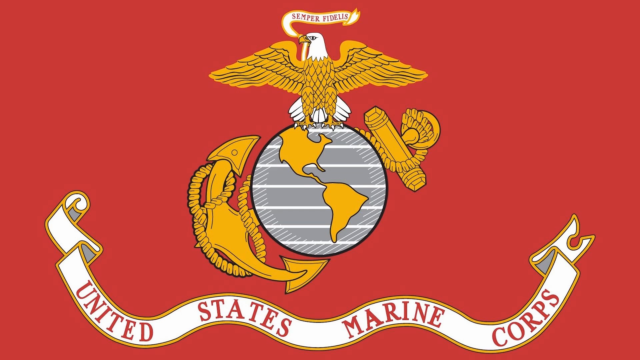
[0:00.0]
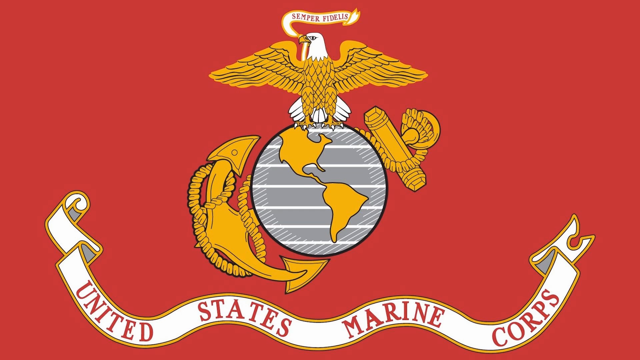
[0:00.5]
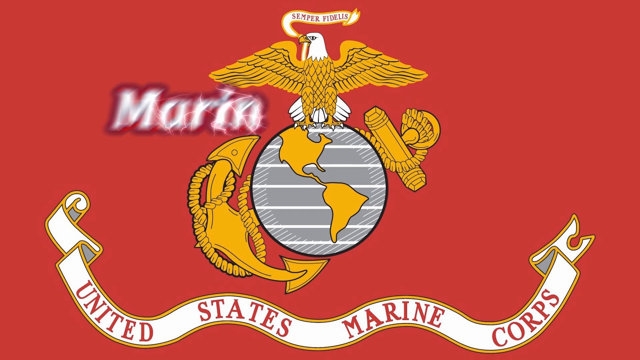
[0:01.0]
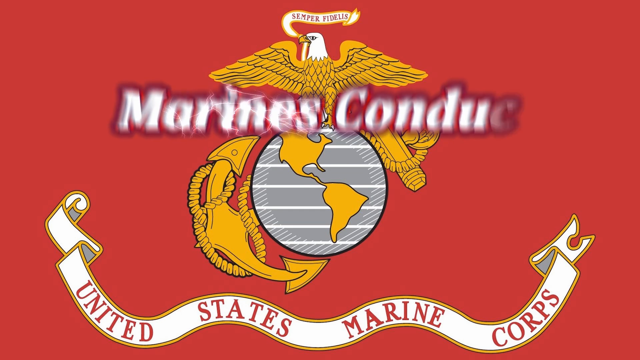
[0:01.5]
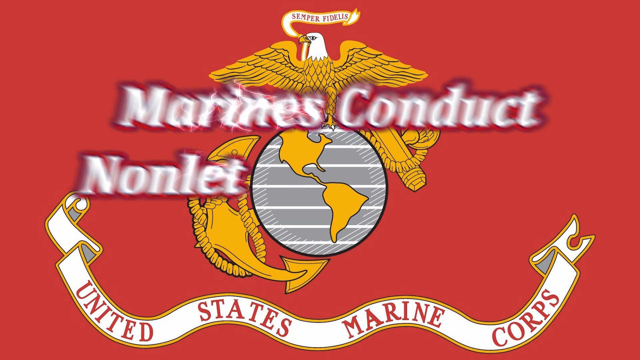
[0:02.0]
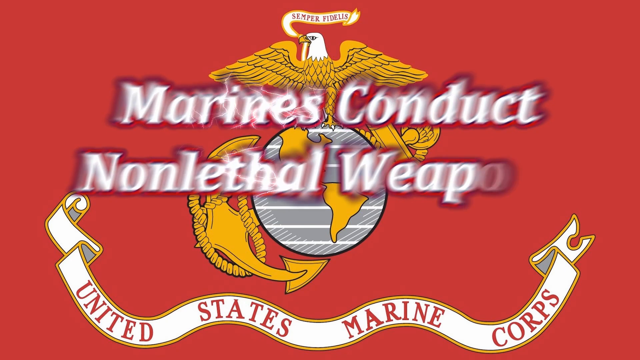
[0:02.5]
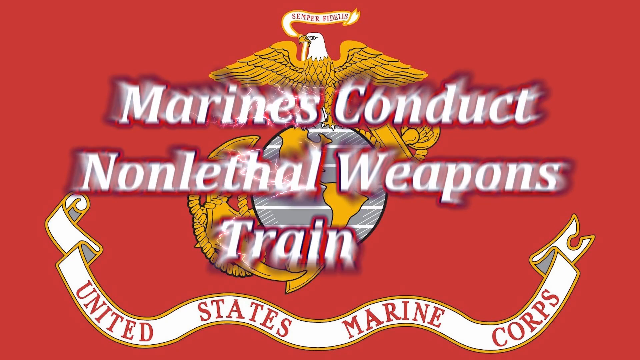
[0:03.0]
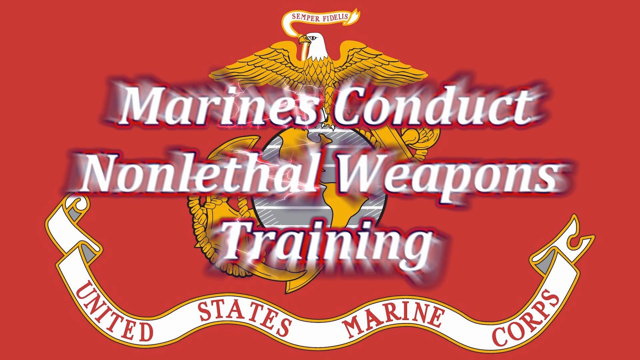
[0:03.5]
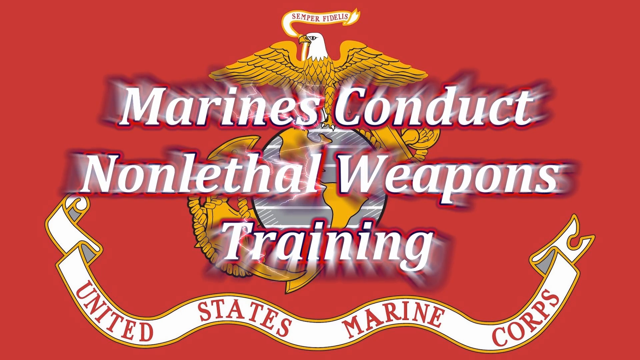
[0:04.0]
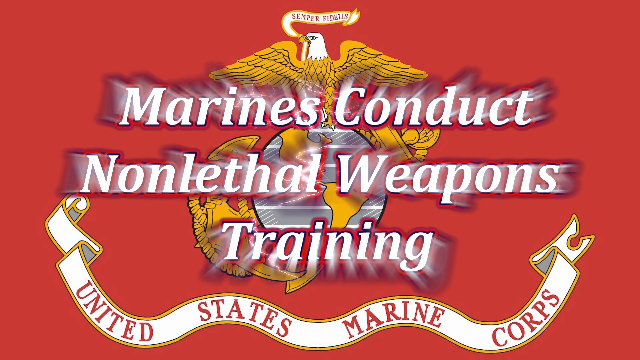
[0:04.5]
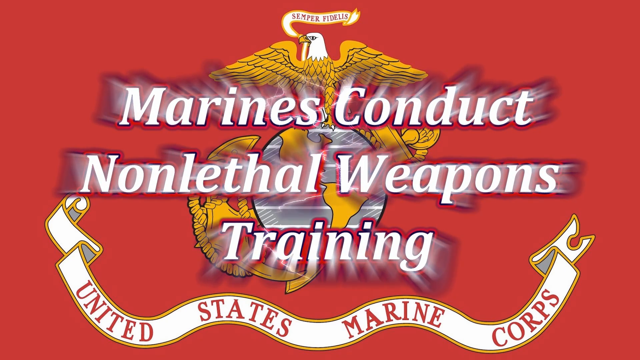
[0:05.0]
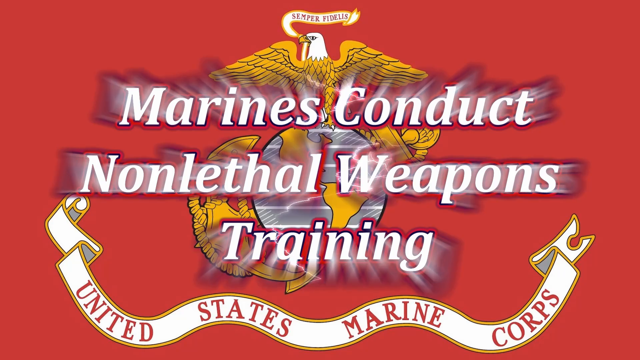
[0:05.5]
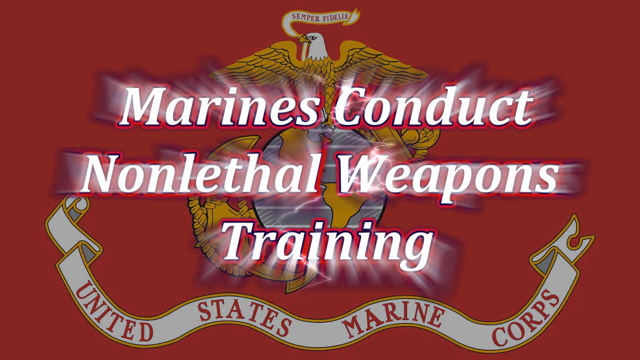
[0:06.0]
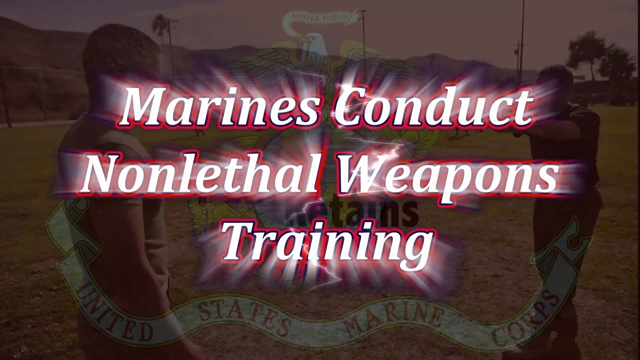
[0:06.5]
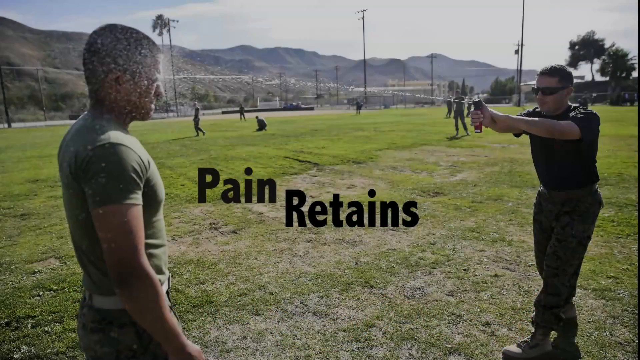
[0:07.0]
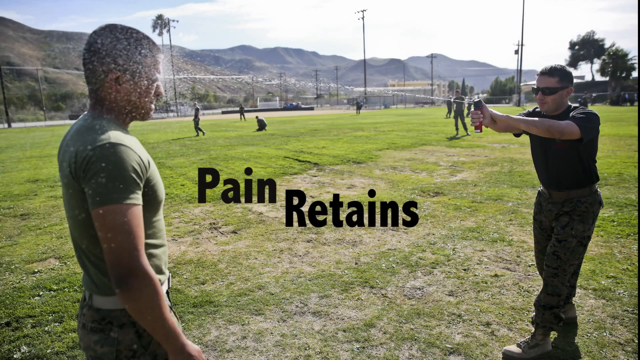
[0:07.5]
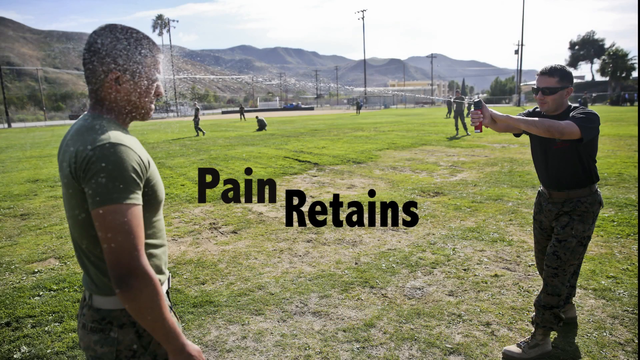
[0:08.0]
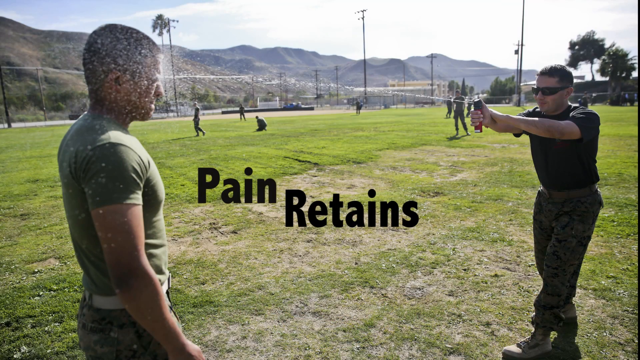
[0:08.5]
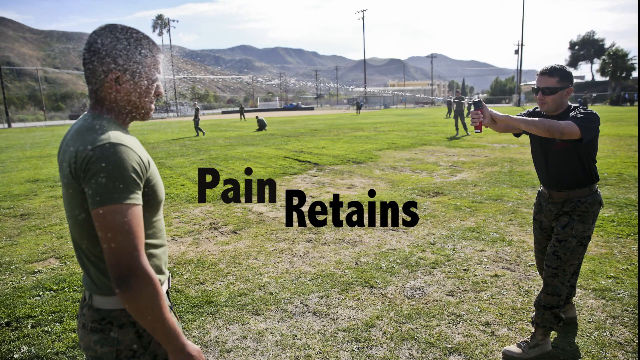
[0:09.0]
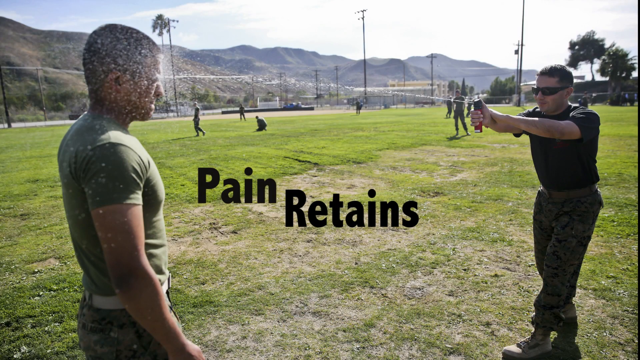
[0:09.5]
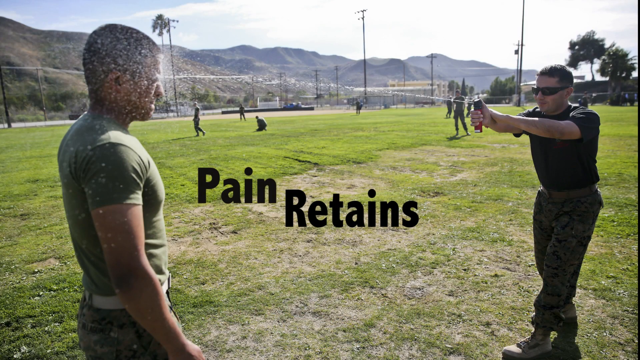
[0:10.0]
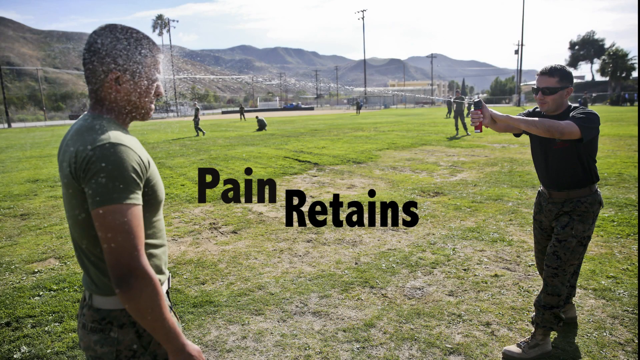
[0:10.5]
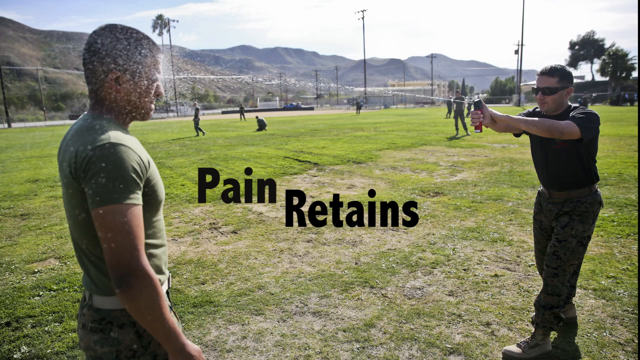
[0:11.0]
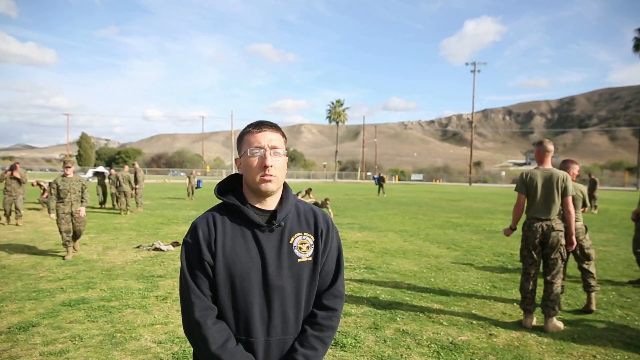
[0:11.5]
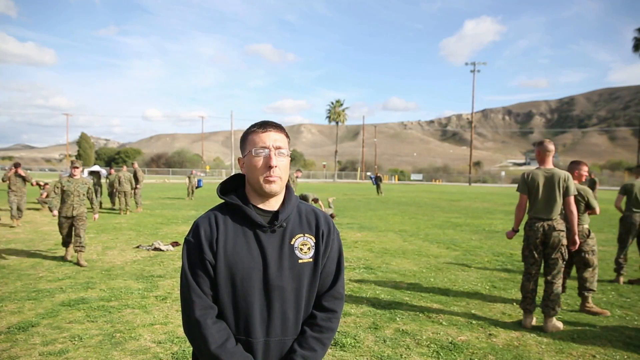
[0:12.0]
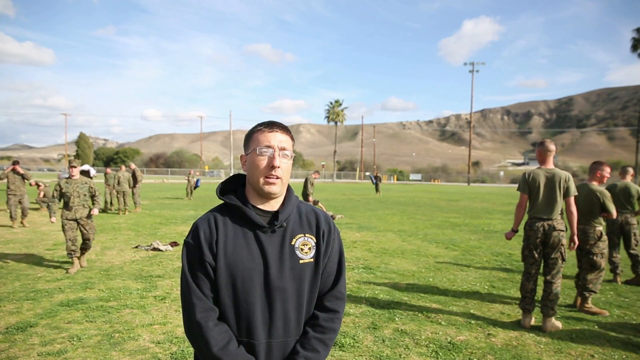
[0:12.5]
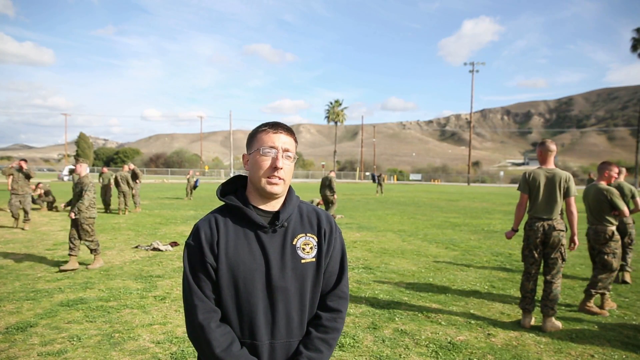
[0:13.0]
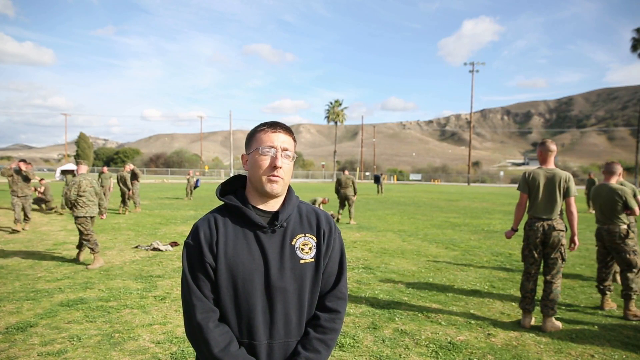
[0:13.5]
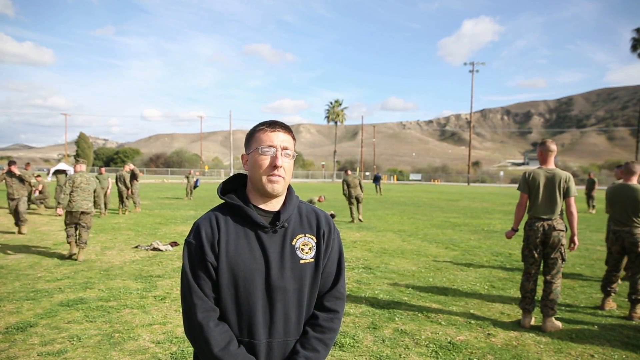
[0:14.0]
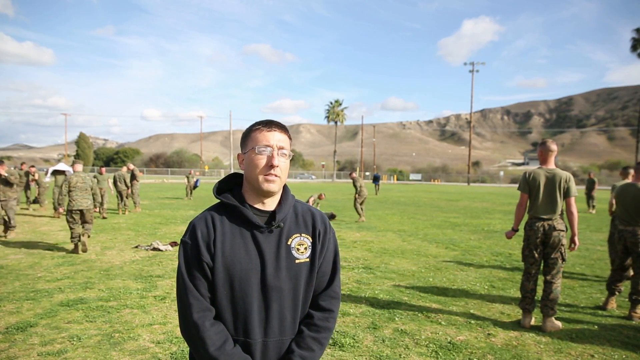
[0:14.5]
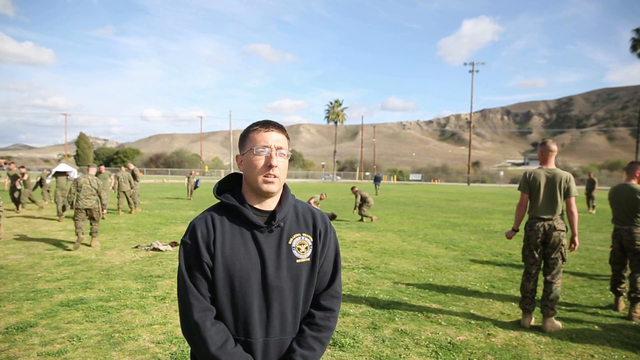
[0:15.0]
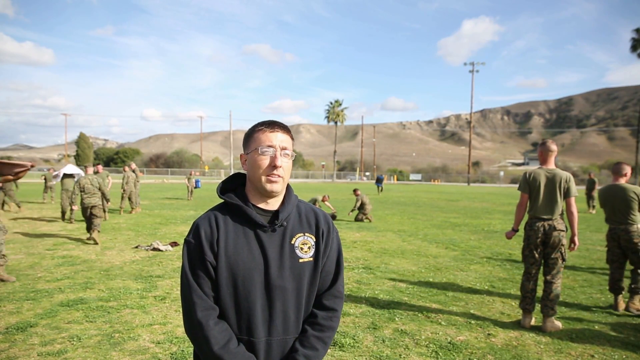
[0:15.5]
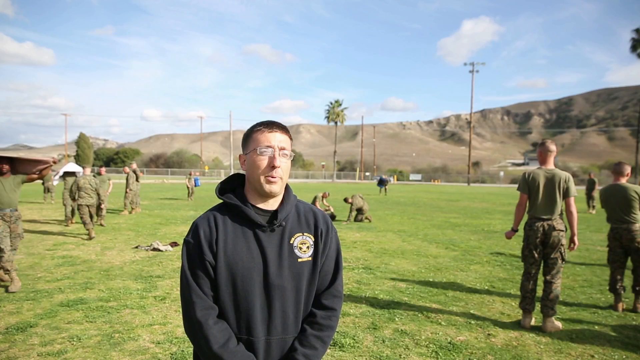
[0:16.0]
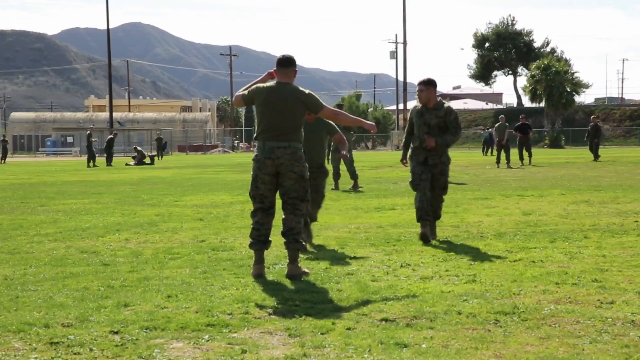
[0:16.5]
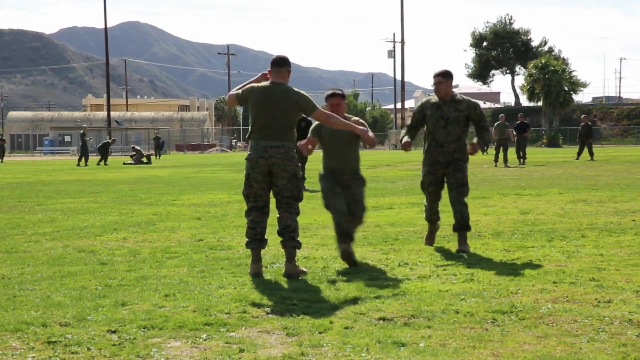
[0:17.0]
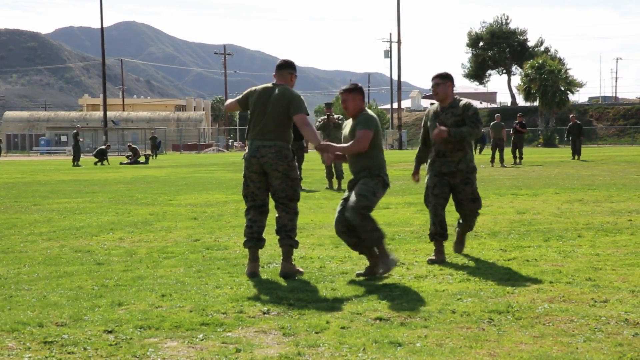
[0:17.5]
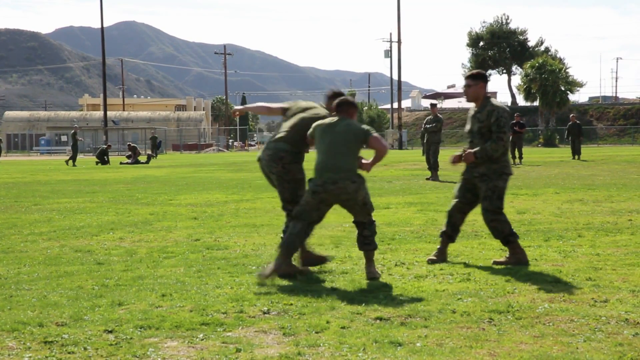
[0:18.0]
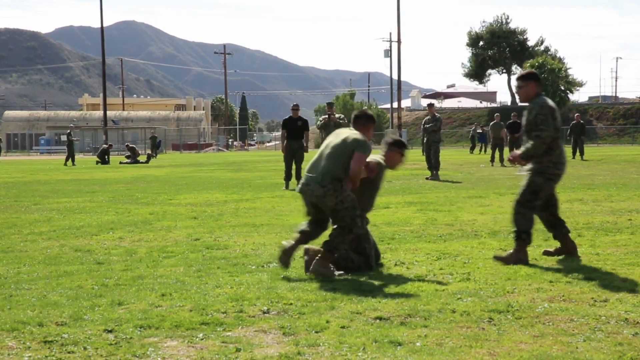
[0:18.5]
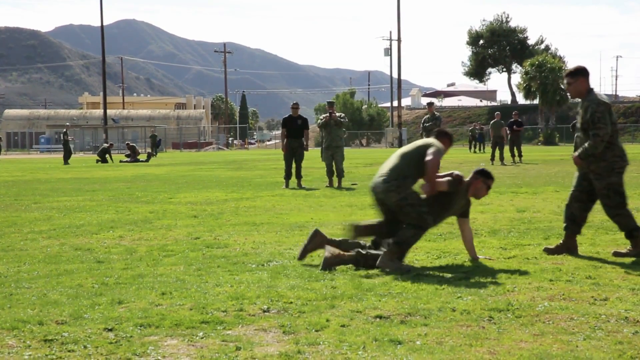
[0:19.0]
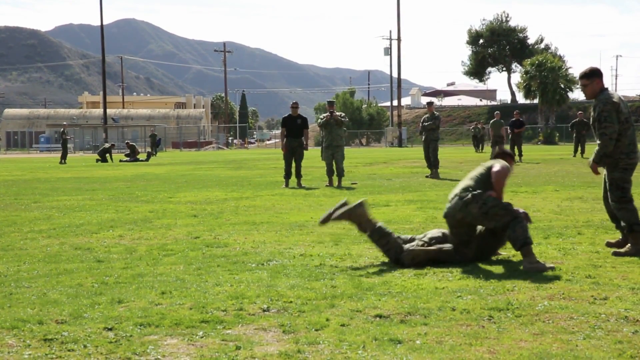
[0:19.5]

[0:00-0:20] The video begins with a title card: a red screen with a logo for the Marines. Across the bottom, in white, a scroll or banner says "United States Marine Corps." In the middle of the screen there is a globe with an eagle on top, and text says "Marine Conduct Non-Lethal Weapons Training." Next comes a still image with text that says "pain retains." Two people are in the foreground and some people are training in the background; one is shooting some sort of liquid directly into the other person's eyes. The video then switches to actual footage. A person wearing a black hoodie with a small logo on the left part of the chest stands in the center of the screen, talking directly to the camera and appearing to host or narrate the training. Behind him, 15 to 20 Marines in camouflage uniforms are active on a large field, with mountain ranges in the background. In the next scene, about 20 Marines are in the background while three are actively involved in a training exercise. One man is standing in what looks like a salute, but with his right arm extended out; another man runs toward him, grabs his arm and throws him down by it, while the third Marine stands ready to help.